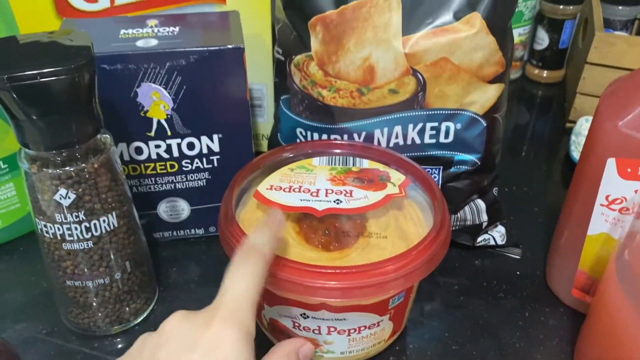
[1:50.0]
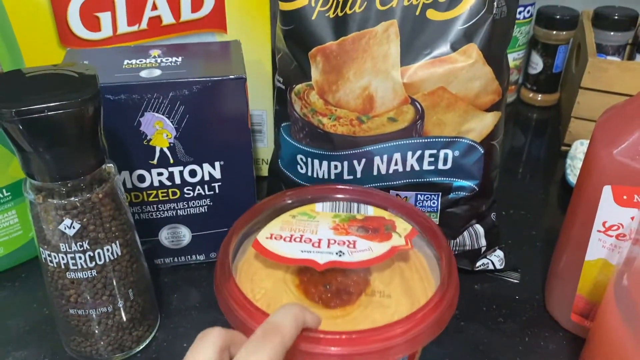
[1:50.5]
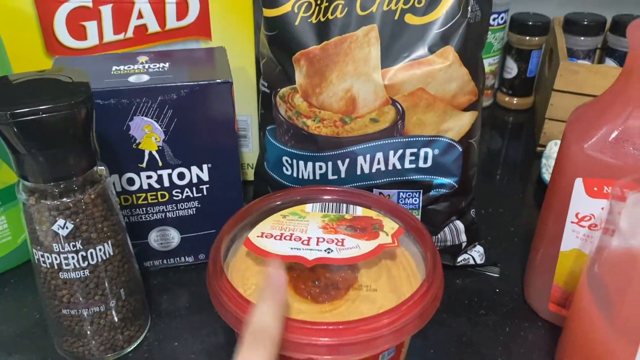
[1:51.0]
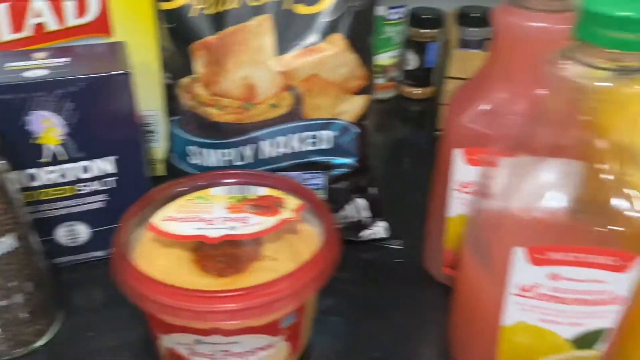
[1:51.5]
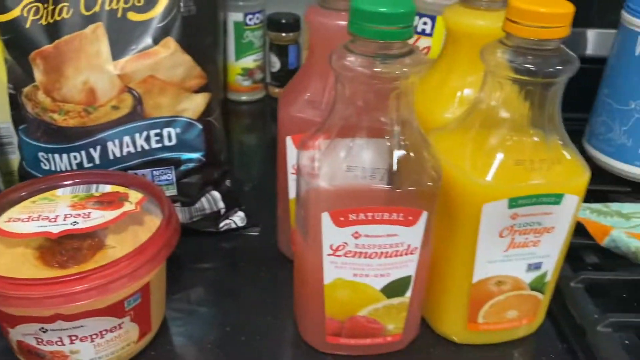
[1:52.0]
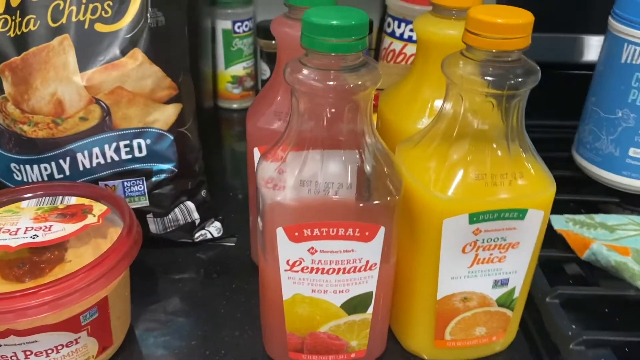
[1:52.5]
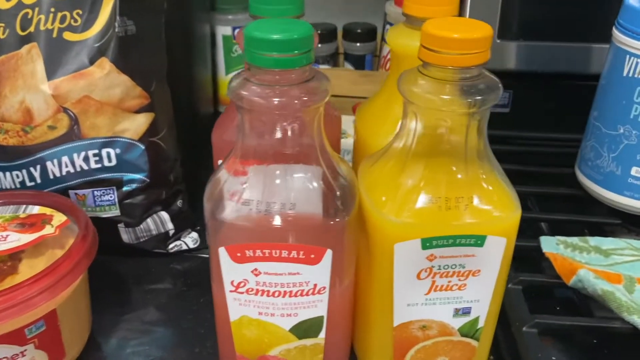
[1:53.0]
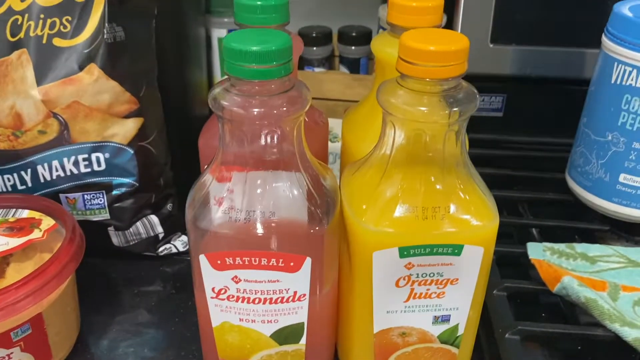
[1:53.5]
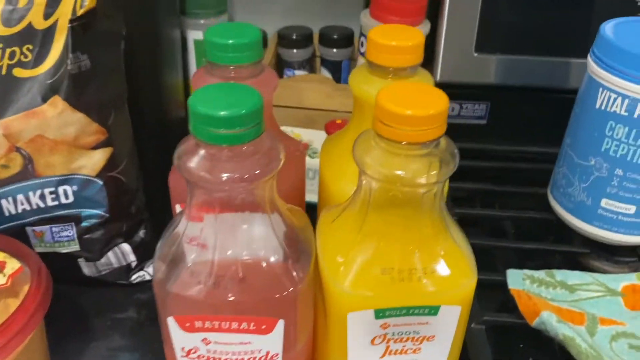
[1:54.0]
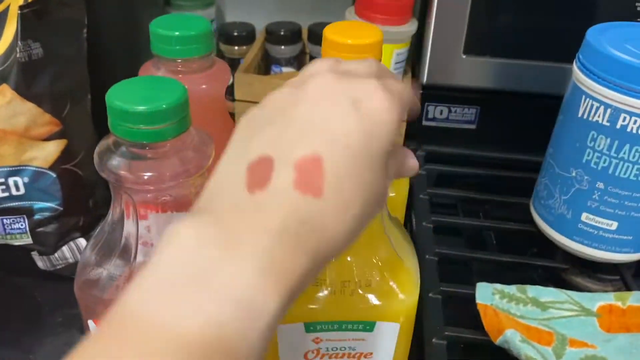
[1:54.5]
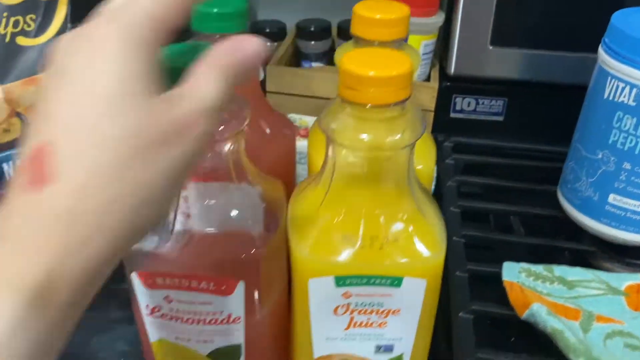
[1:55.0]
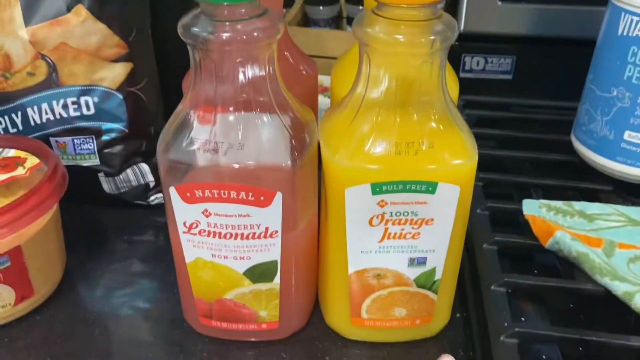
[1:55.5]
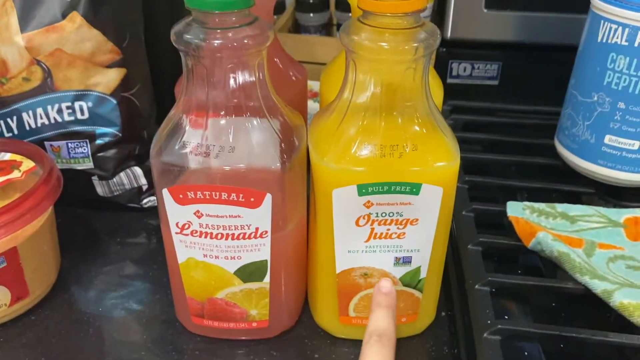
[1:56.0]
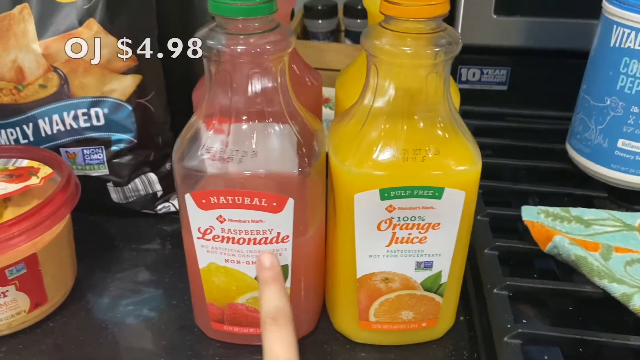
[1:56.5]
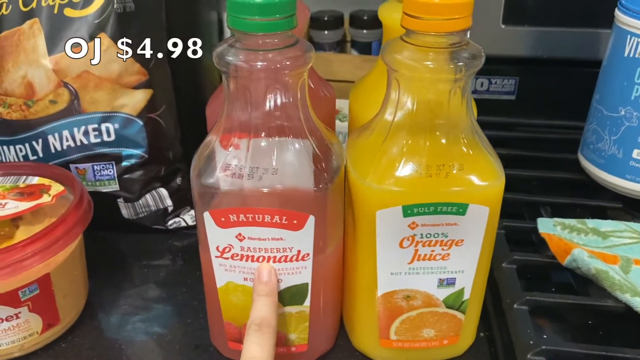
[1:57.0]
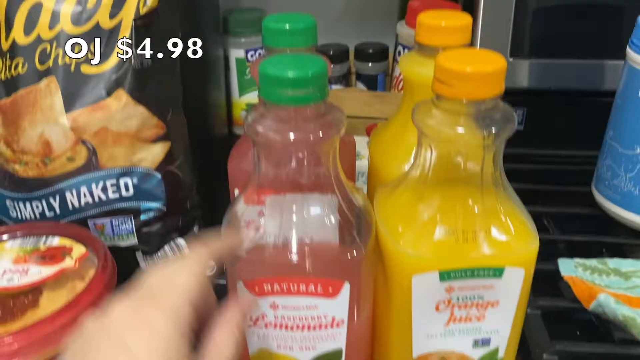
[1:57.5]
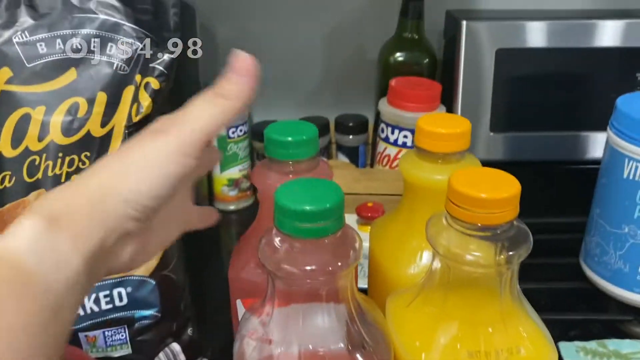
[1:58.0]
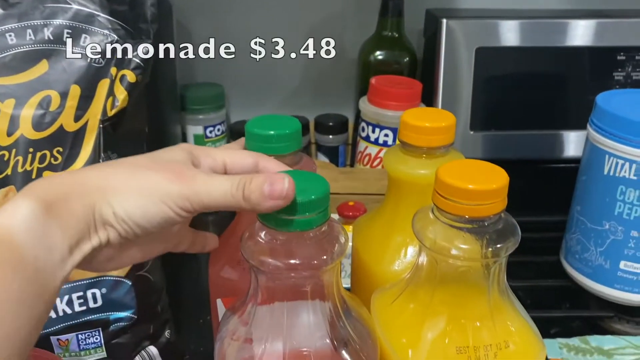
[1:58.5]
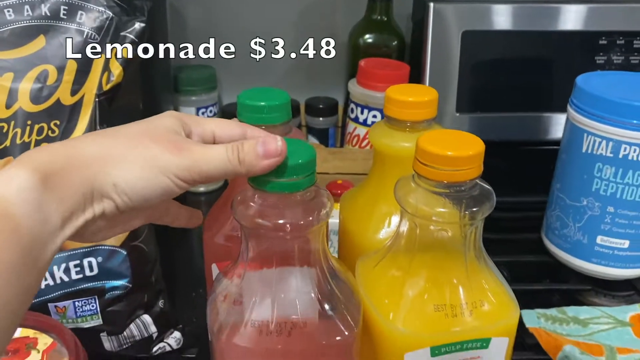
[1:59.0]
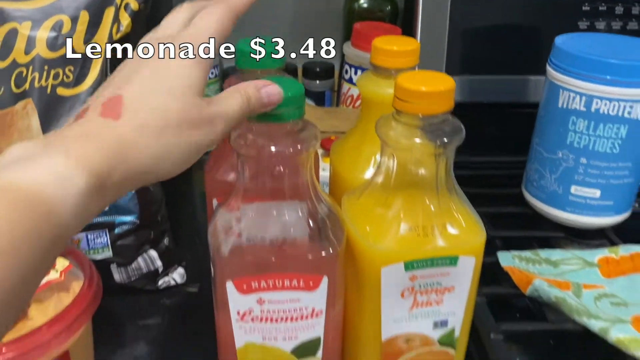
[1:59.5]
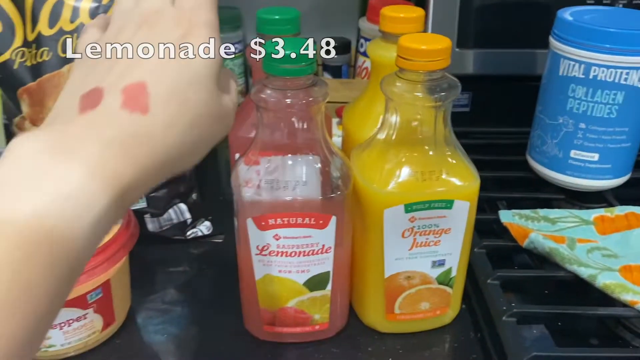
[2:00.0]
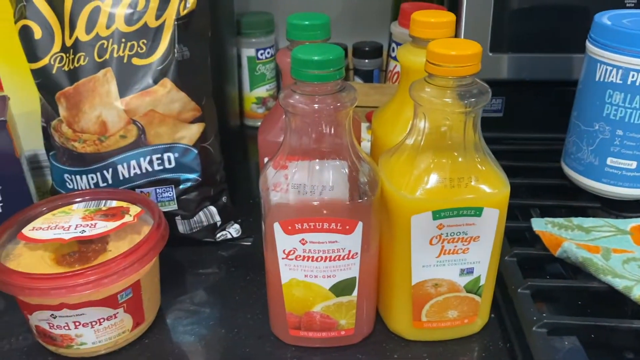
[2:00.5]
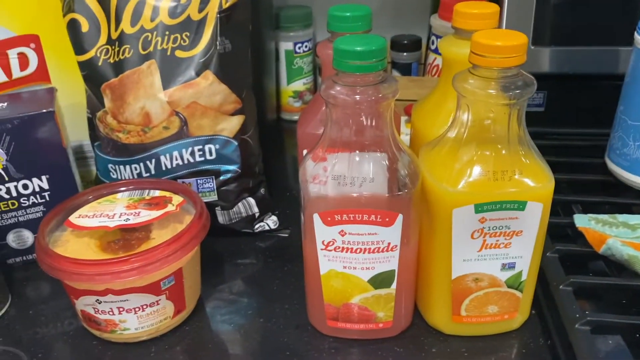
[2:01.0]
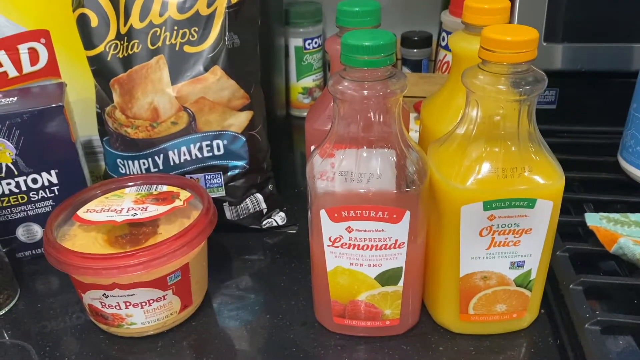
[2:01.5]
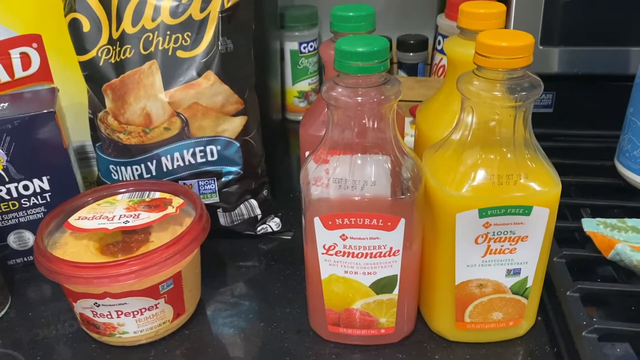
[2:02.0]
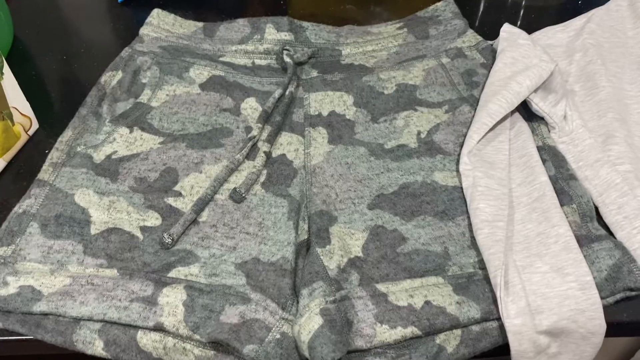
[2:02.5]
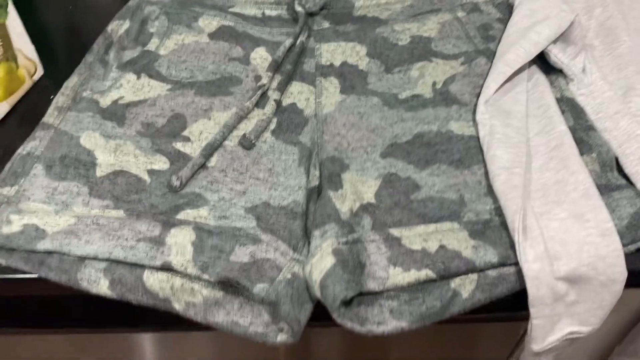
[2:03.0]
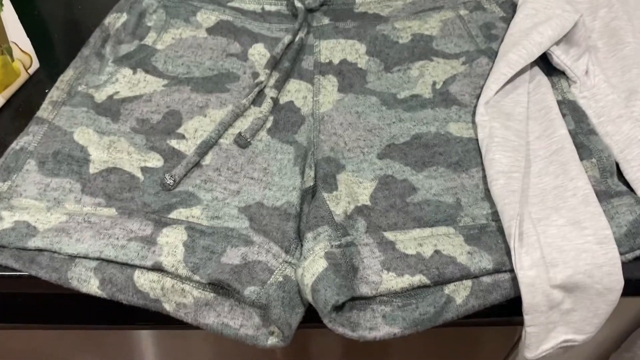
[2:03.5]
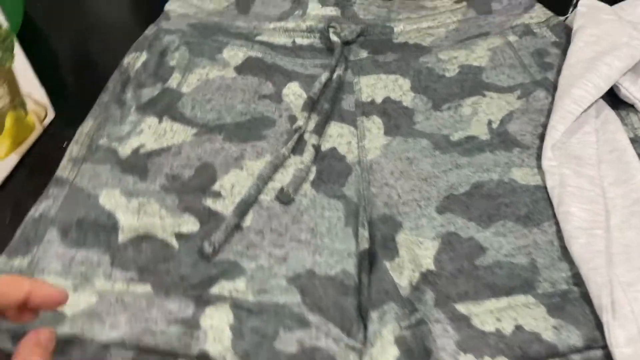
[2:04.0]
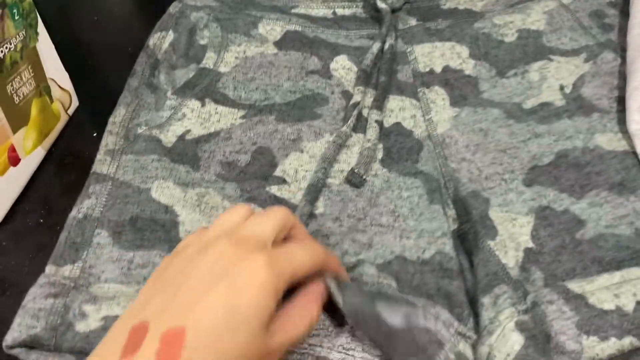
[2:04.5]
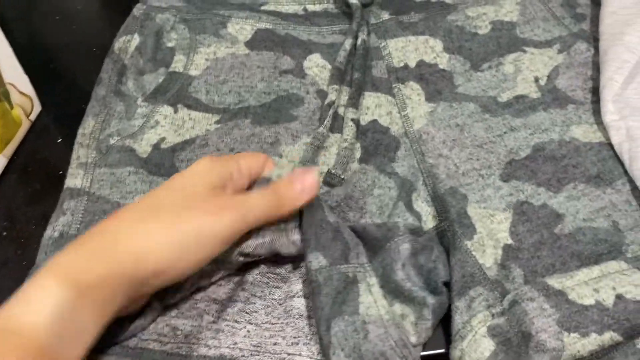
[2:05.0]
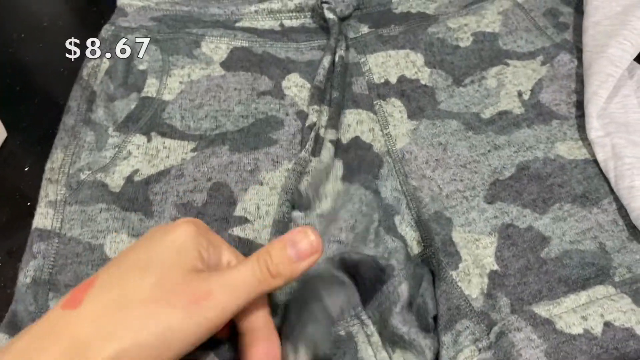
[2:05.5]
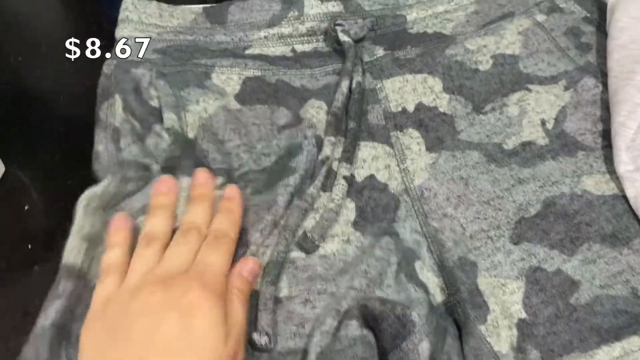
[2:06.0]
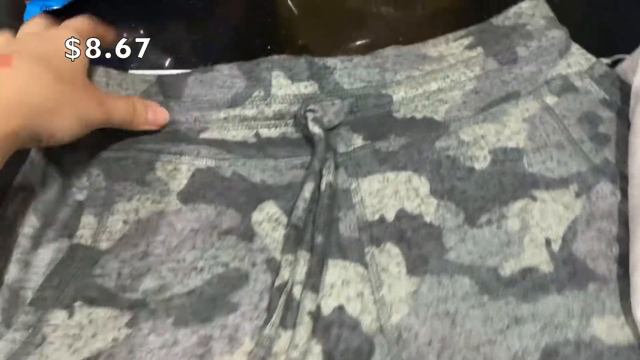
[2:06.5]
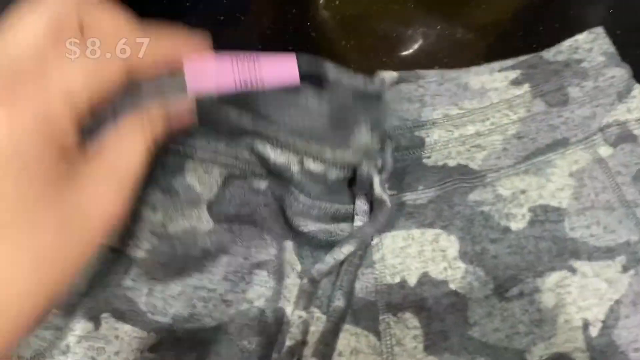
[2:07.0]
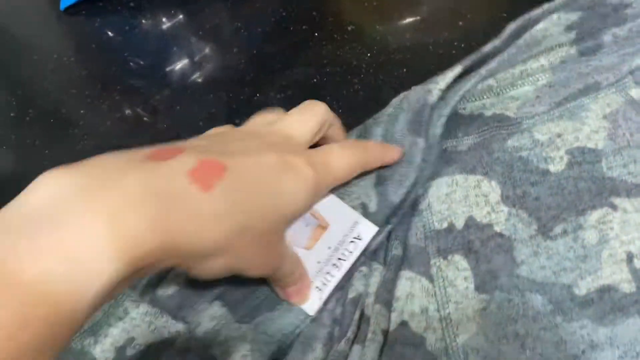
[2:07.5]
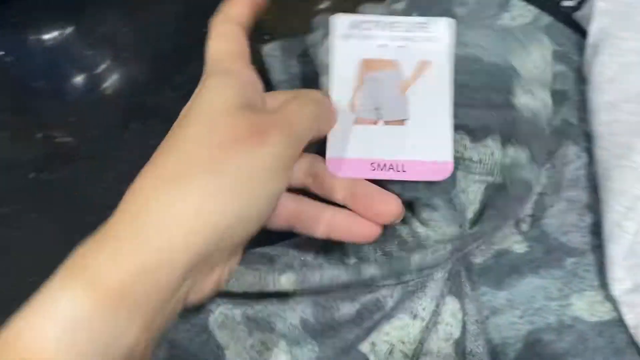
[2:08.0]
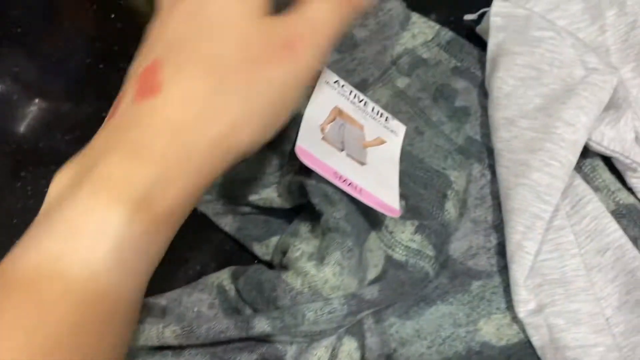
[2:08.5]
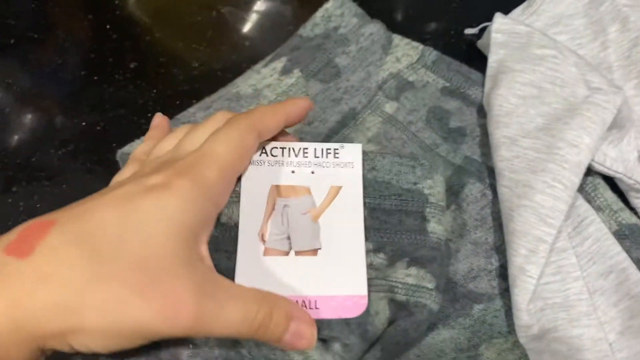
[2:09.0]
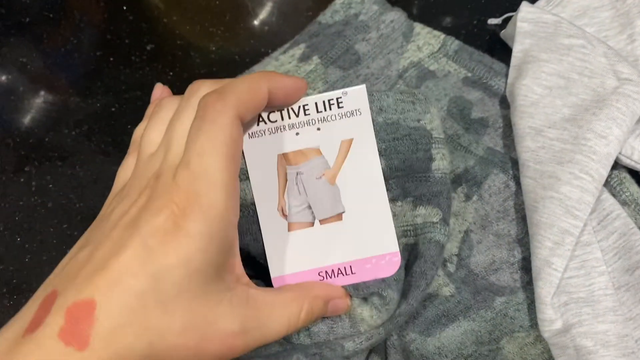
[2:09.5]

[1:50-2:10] Many different items are on the screen, including black peppercorn, iodized salt, pita chips and some juice, with hummus in the very center. The person's left index finger hovers over the hummus lid, then hooks into the lid and pulls the item forward slightly before releasing it, and taps the lid once again. The camera pans right to a clear shot of the juice: some of the juice is missing from the front left container, which is raspberry lemonade, with another bottle of the same juice behind it, and two bottles of orange juice on the right. The person grabs the top portion of the right orange juice bottle with the left hand, moves it over and then back toward them, then points to the orange juice with the left index finger and then to the label of the raspberry lemonade. At the very top, text appears that says "OJ $4.98."